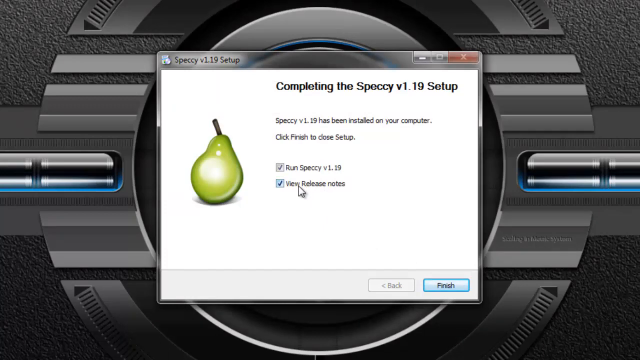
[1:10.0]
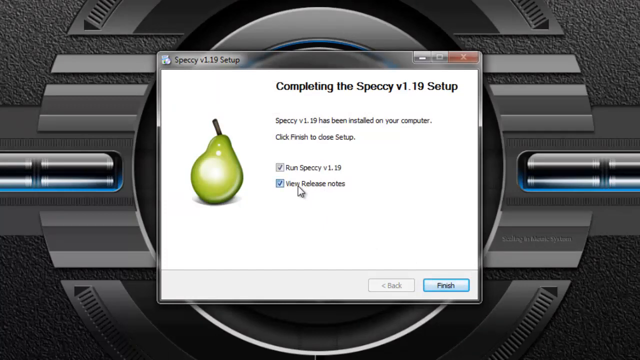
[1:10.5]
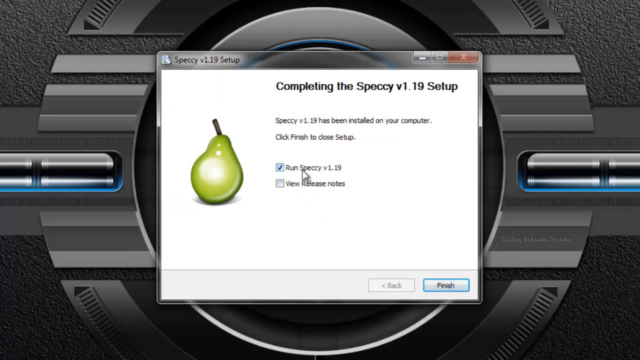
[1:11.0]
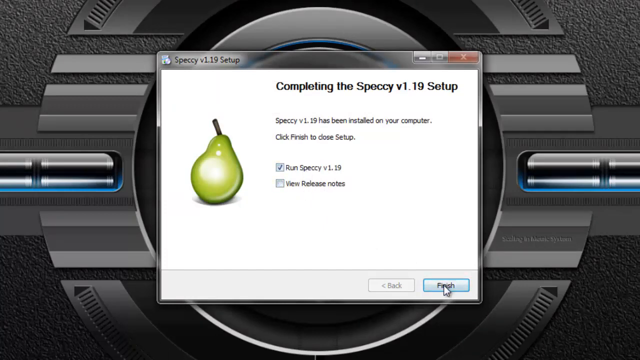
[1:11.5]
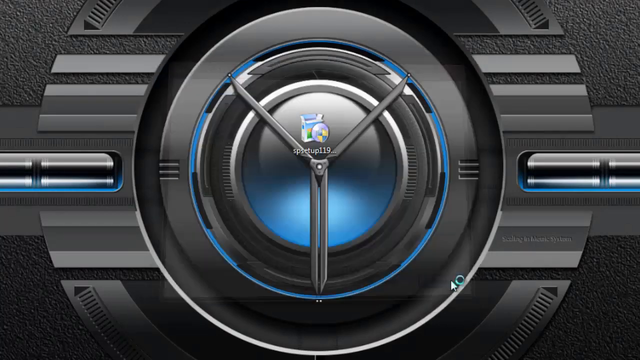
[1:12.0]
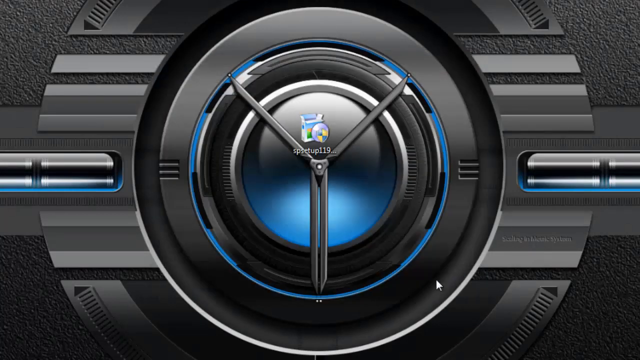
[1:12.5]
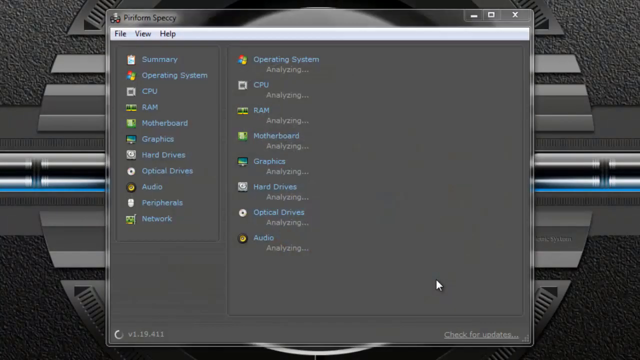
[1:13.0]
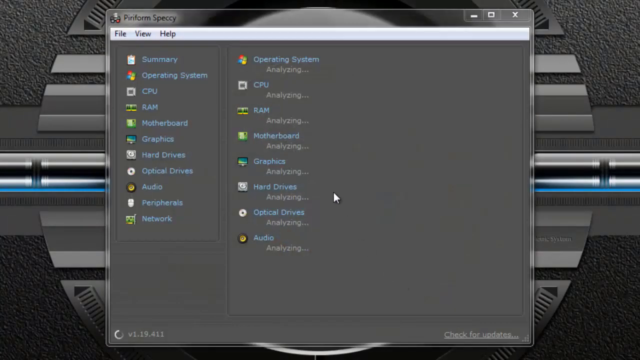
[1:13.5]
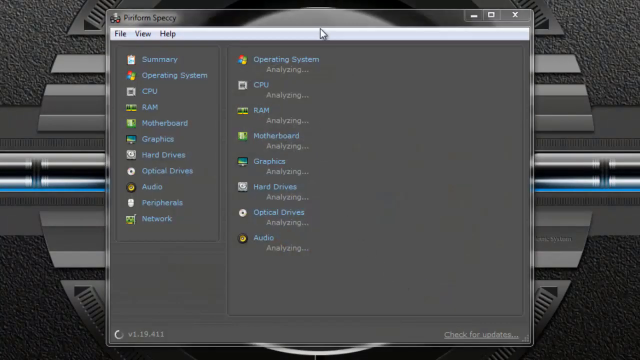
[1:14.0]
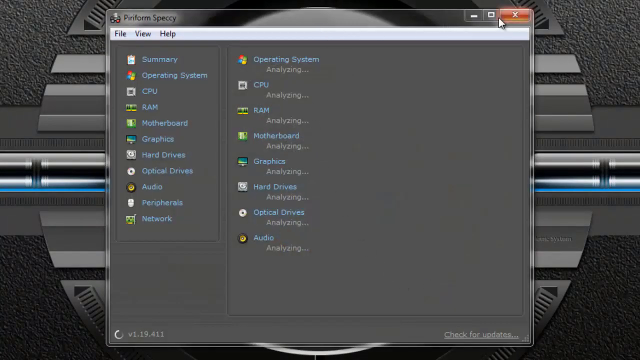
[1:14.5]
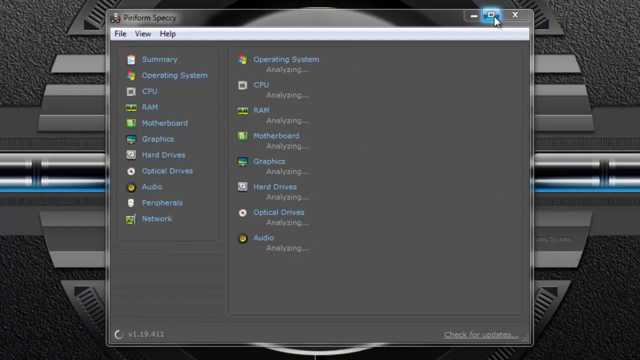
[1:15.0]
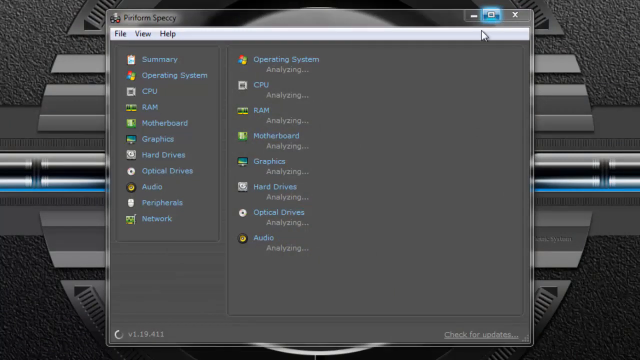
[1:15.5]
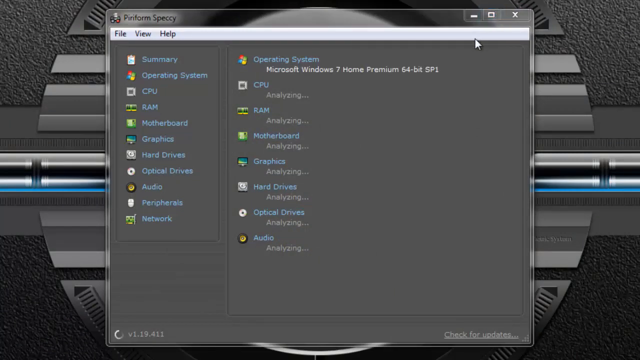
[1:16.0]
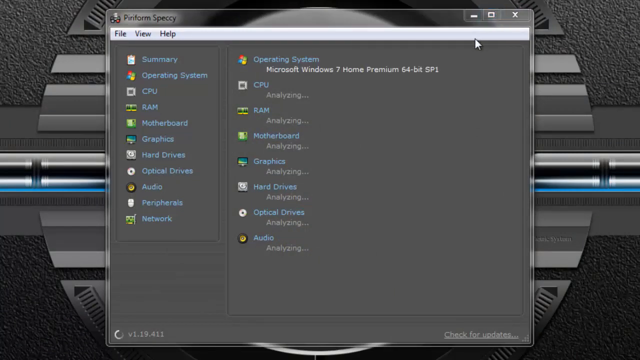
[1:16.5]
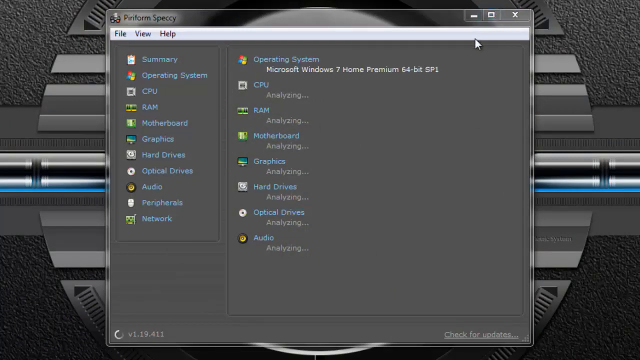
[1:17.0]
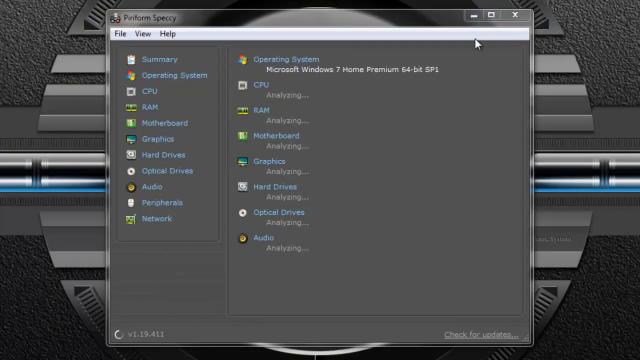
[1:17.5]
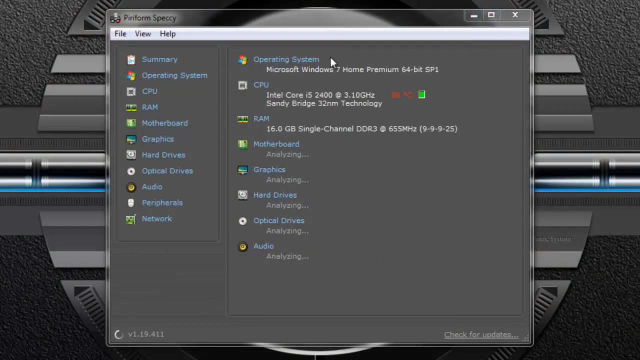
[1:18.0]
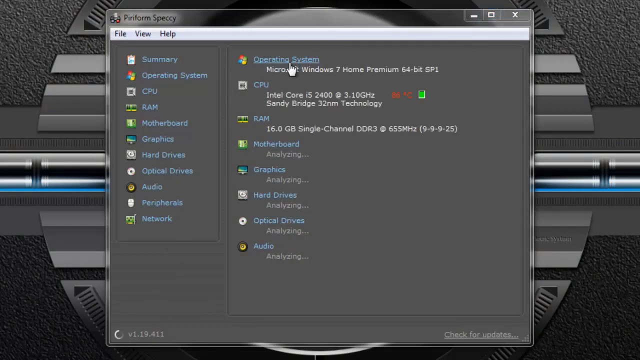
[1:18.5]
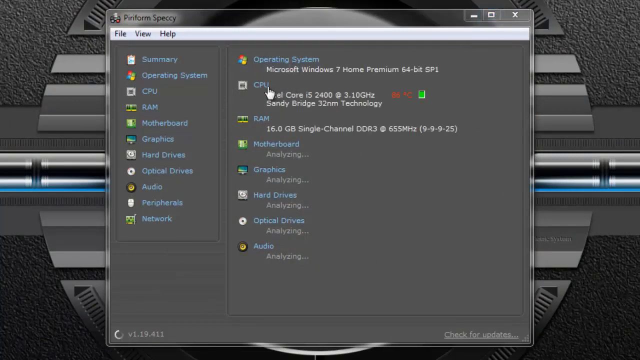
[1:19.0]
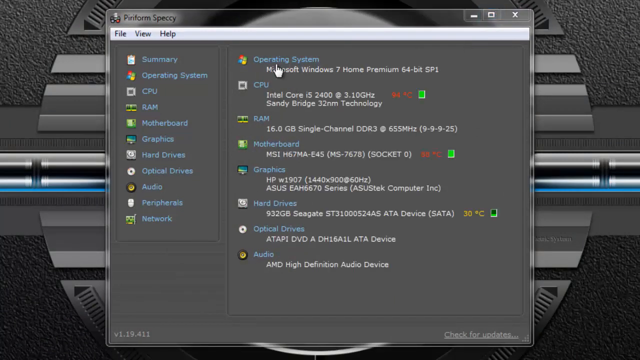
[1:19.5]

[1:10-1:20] After installation, the Specacy application opens. It has several tabs: Summary, Operating System, CPU, RAM, Motherboard, Graphics, Hard Drive, Optical Drive, Audio, Peripherals and Network. It is analyzing the operating system, CPU, RAM, motherboard, graphics, hard drive, optical drive and audio. The operating system analysis completes and shows "Windows 7 Home Premium, 64-bit, Service Pack 1." The CPU is an Intel Core i5-2400, 3.1 GHz, and the RAM is 16 GB of DDR3. The motherboard appears to be an MSI motherboard. The hard drive, which goes by quickly, is 932 GB and a SATA drive; the optical drive is an ATAPI DVD, and the audio is an AMD high-def audio device.